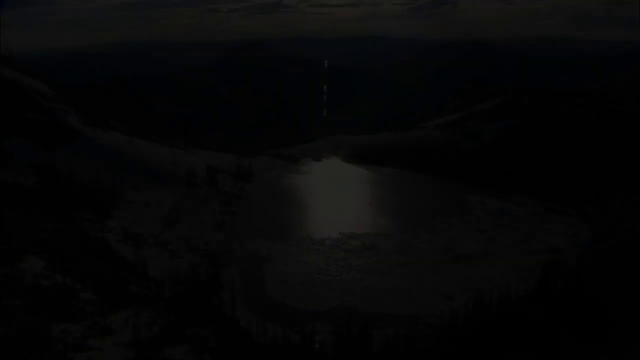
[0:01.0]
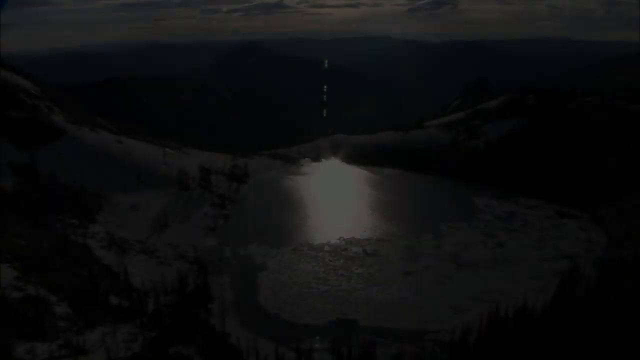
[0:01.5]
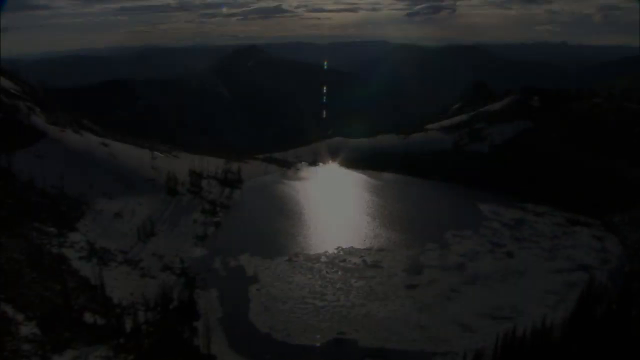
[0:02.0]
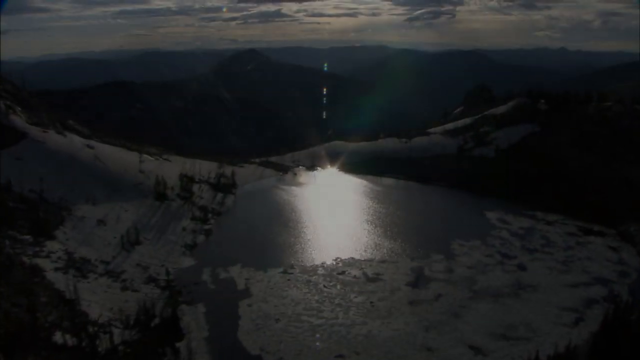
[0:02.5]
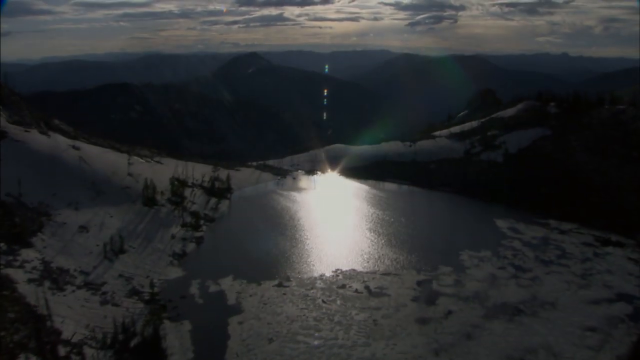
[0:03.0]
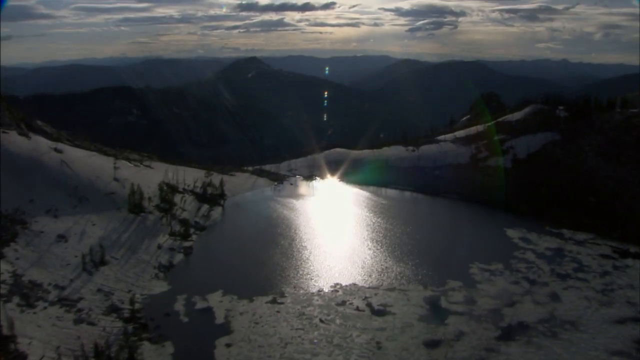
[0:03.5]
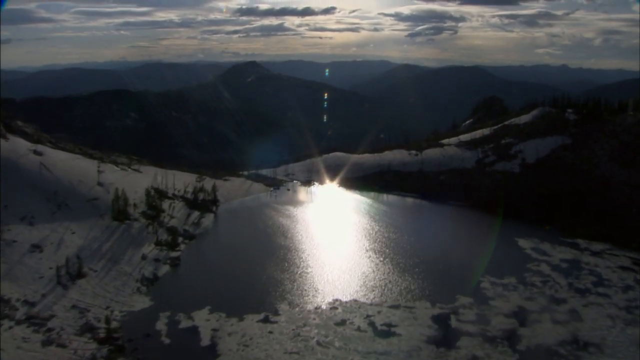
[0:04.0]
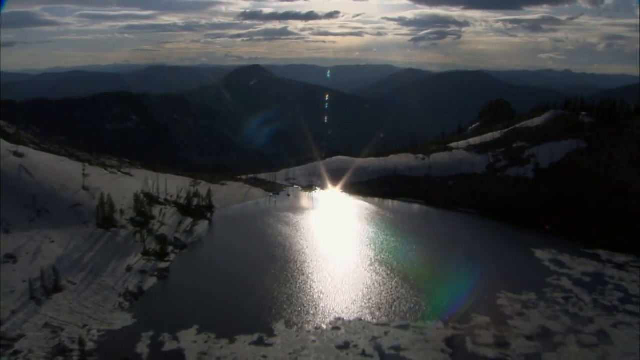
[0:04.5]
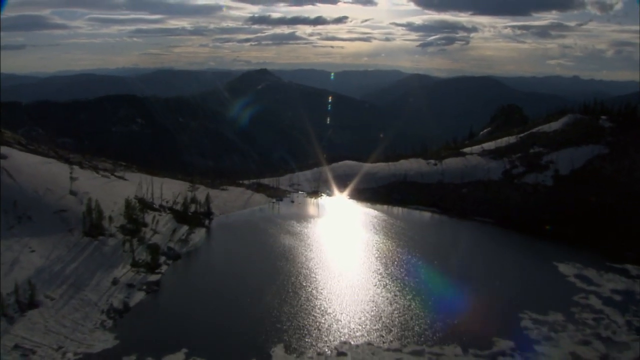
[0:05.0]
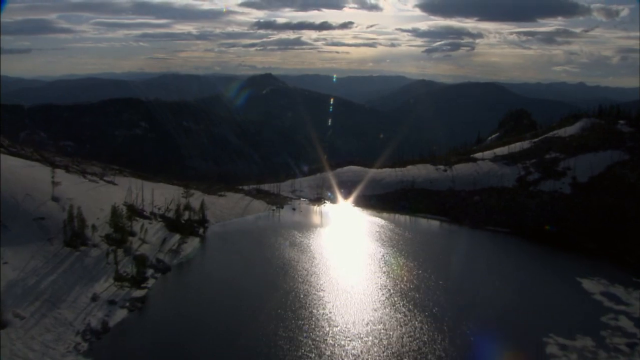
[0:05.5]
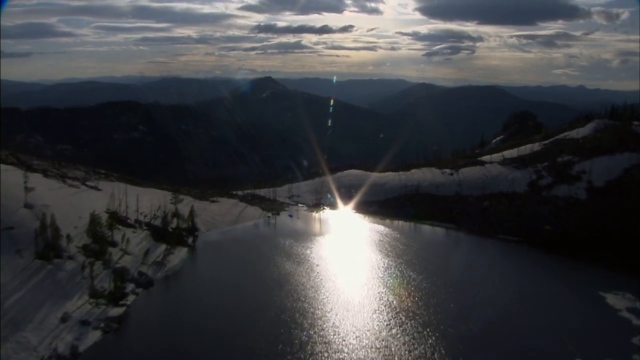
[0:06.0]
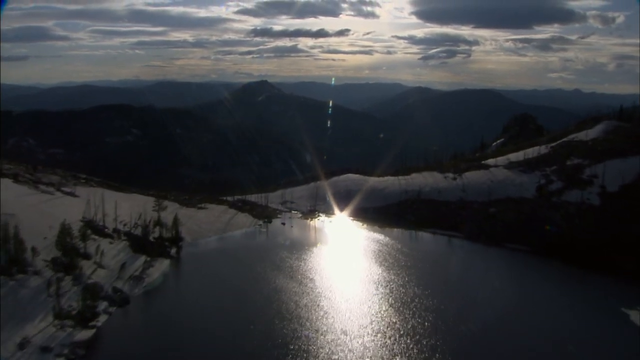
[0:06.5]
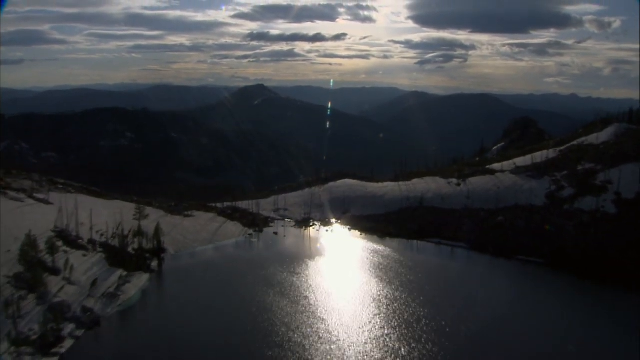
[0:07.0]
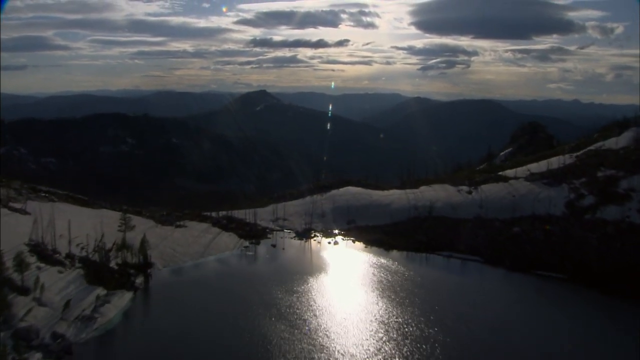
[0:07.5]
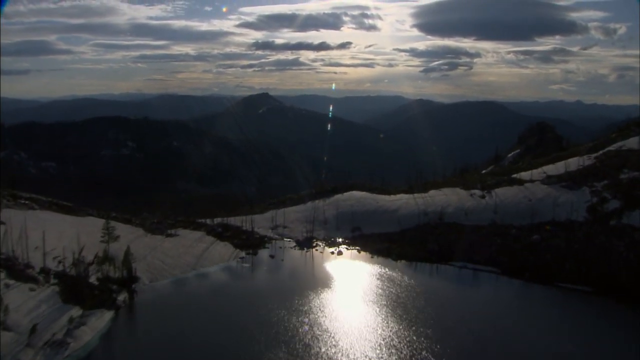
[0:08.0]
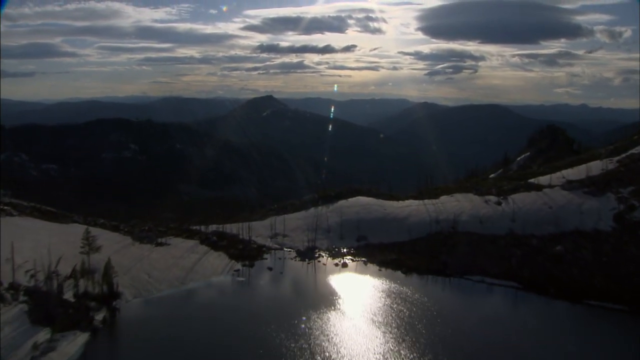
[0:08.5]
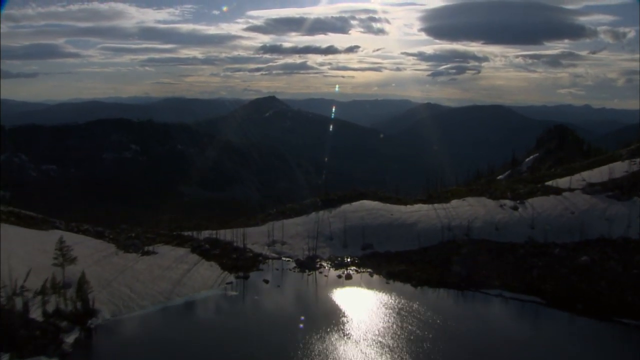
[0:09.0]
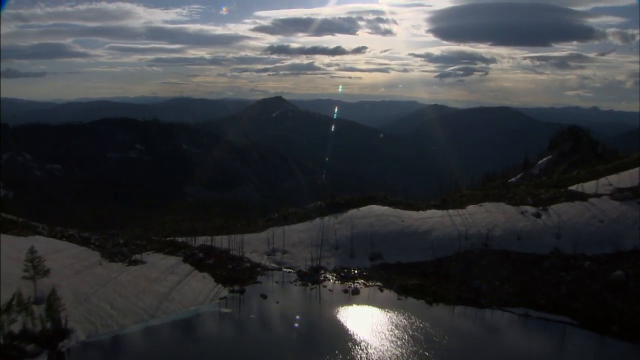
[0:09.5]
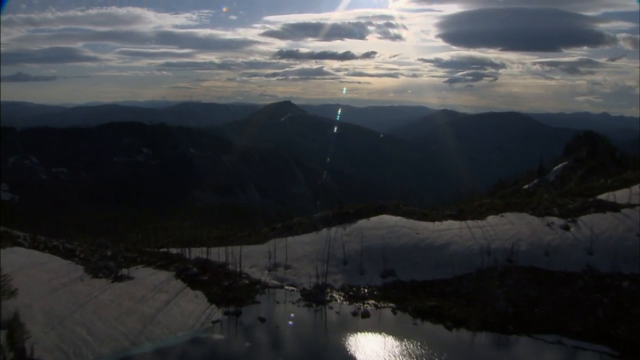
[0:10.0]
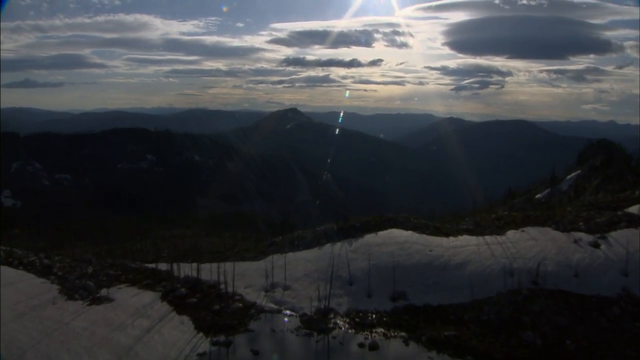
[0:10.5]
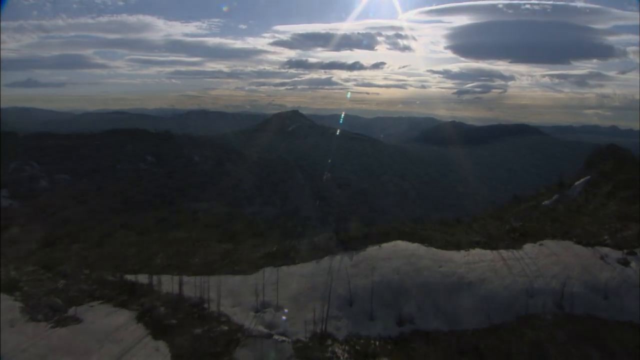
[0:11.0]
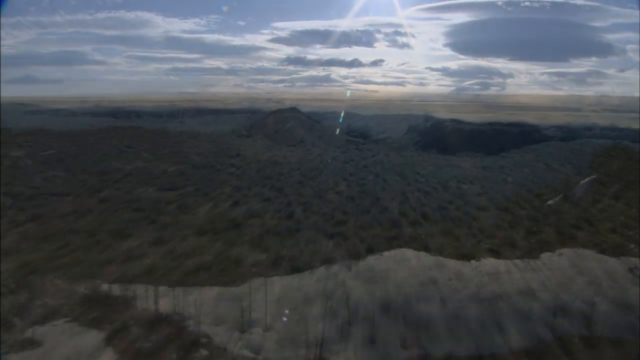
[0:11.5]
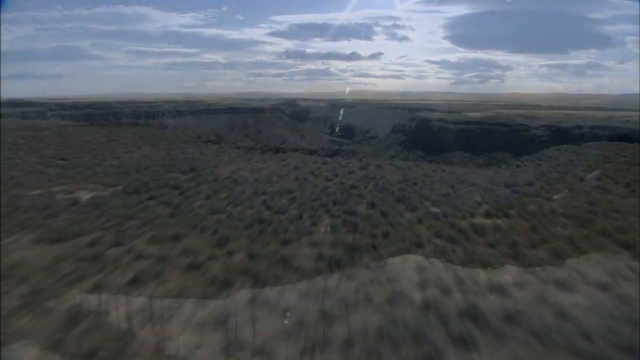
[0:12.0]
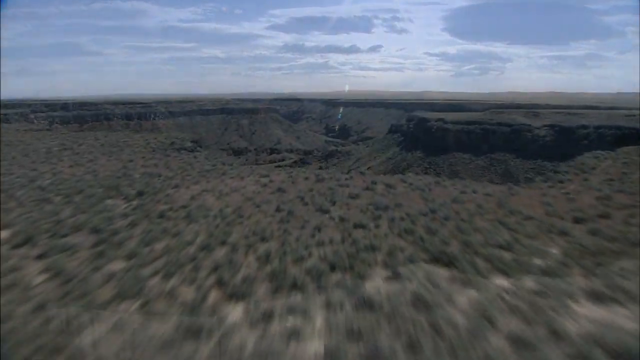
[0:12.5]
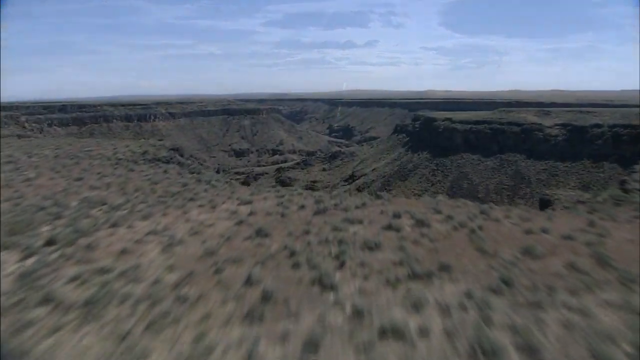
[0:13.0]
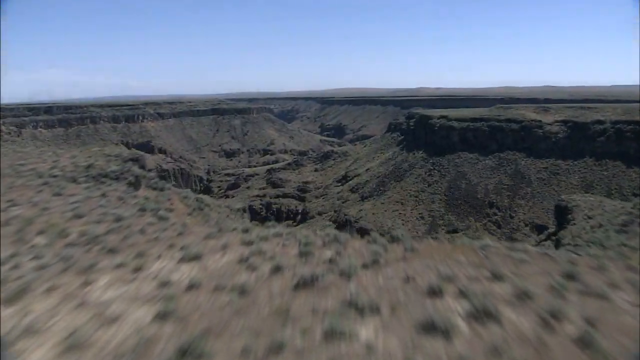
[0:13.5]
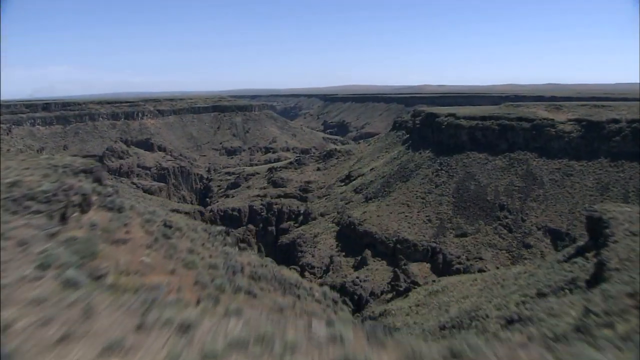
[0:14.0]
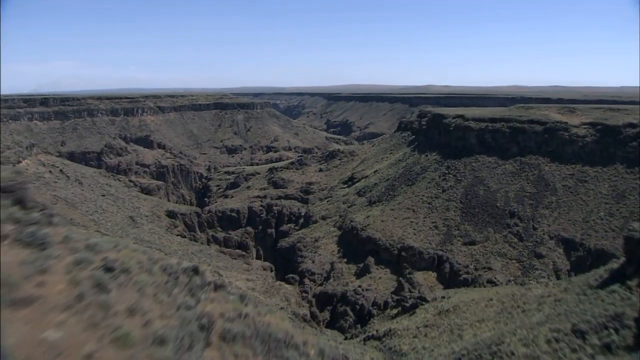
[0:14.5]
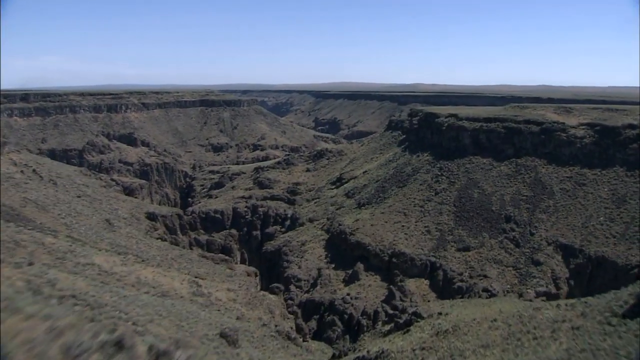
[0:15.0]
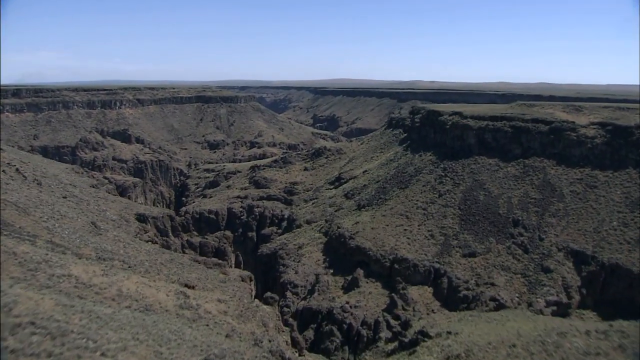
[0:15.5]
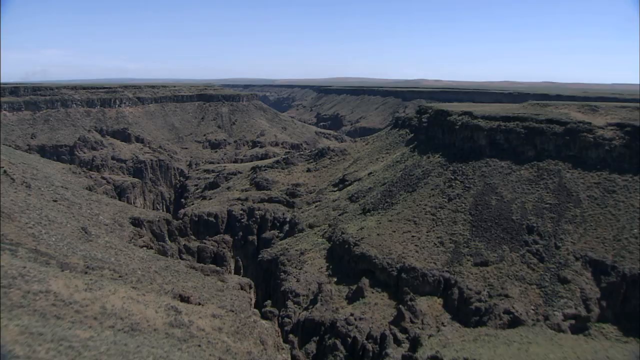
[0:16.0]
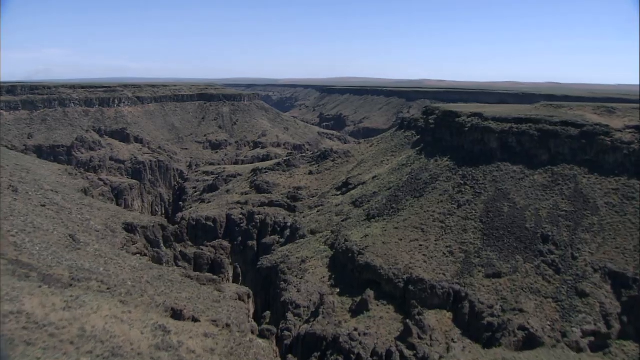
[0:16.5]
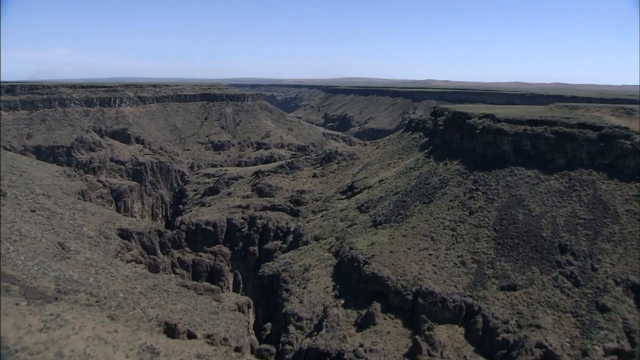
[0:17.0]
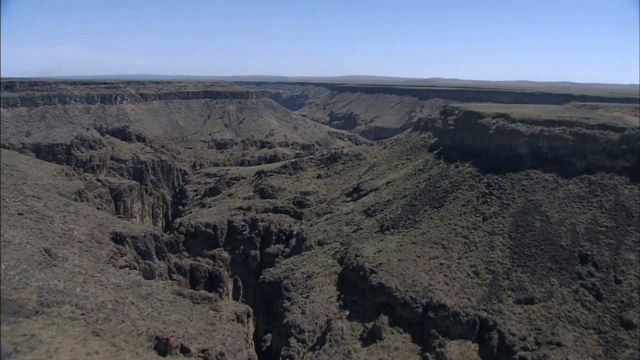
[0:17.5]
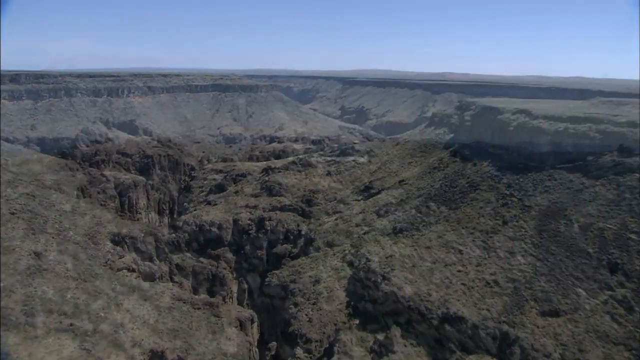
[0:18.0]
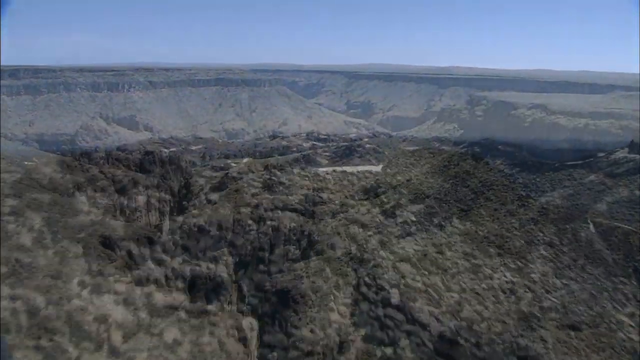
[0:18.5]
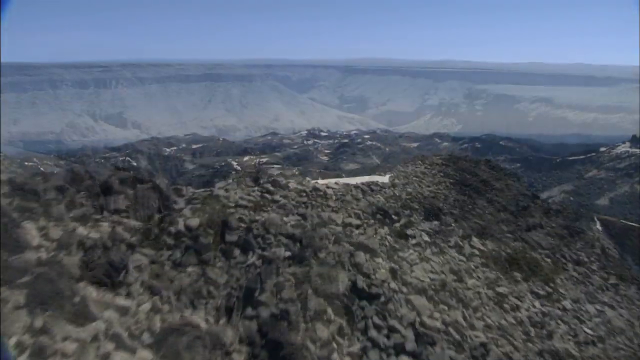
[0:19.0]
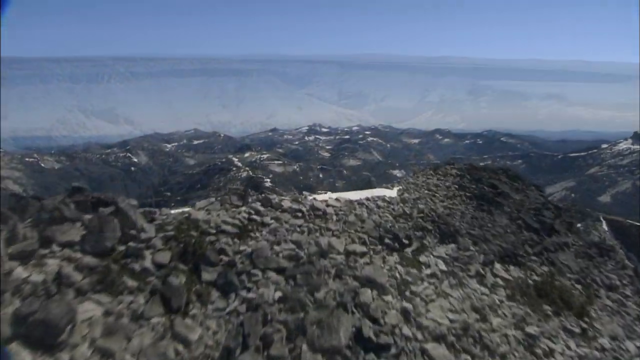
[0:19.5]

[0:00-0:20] The video opens on a dark screen that slowly transitions to drone footage of what looks like land down below. Sun beams off what appears to be a frozen pond. The image is not very bright yet, but the ground is white and snowy, with lots of mountains in the back. The view switches to the edge of a mountain, with the inside much lower; it looks like drone footage of the inside of a mountain's edge. The next camera angle shows the edge of a much higher mountain. So far the footage is a mix of drone shots of different edges of mountainous areas.